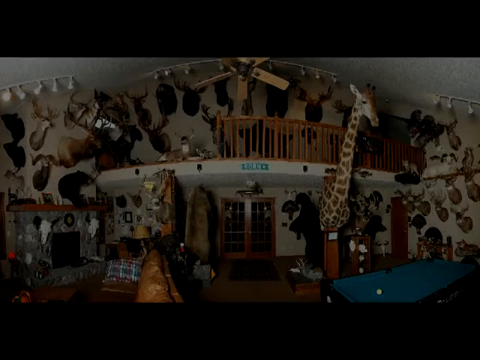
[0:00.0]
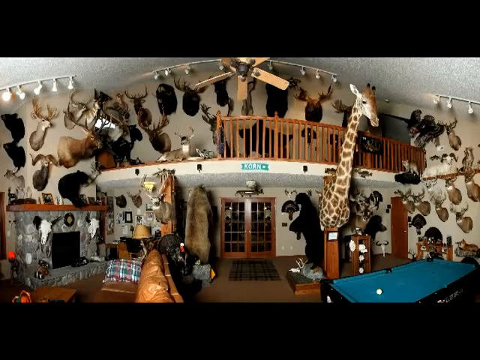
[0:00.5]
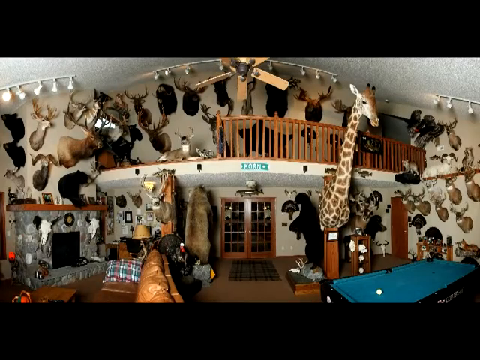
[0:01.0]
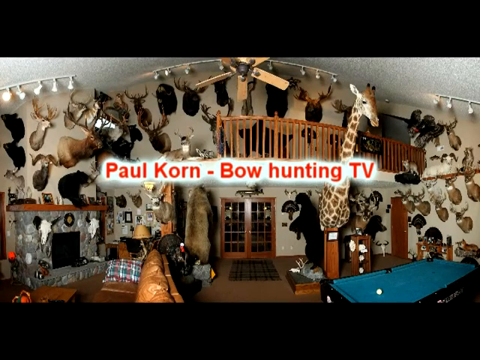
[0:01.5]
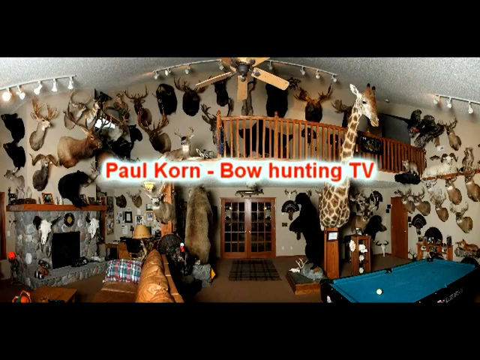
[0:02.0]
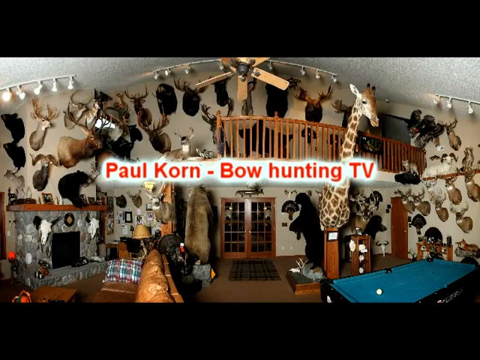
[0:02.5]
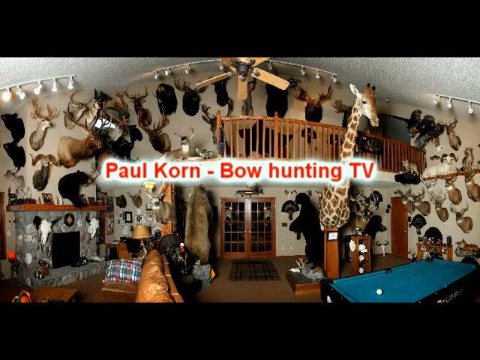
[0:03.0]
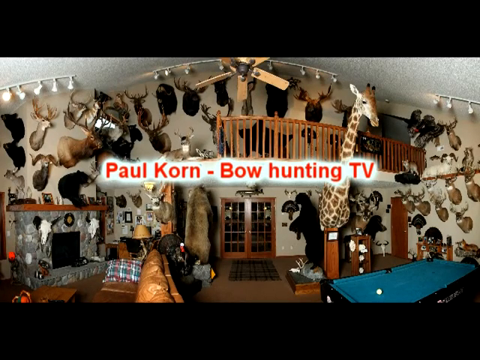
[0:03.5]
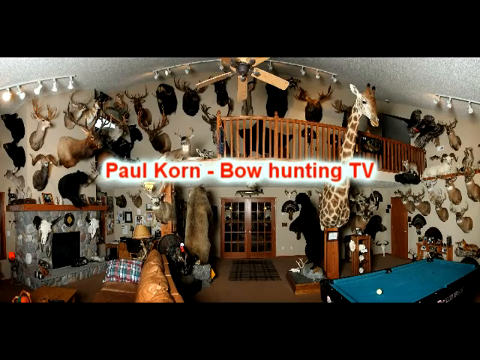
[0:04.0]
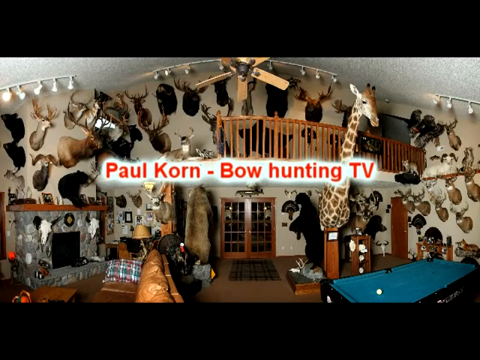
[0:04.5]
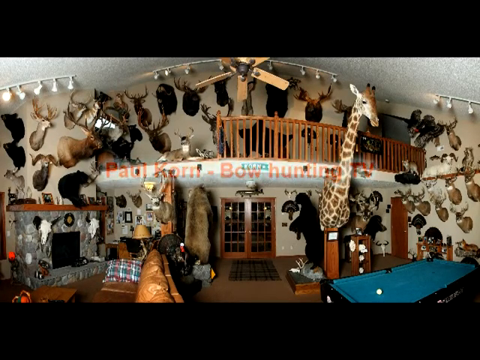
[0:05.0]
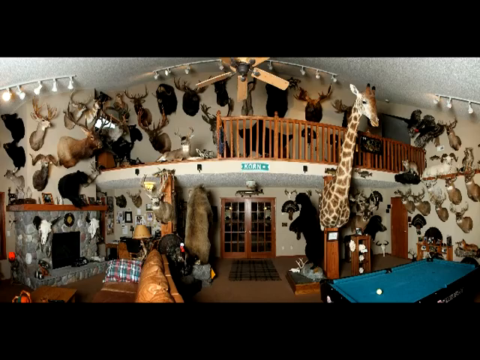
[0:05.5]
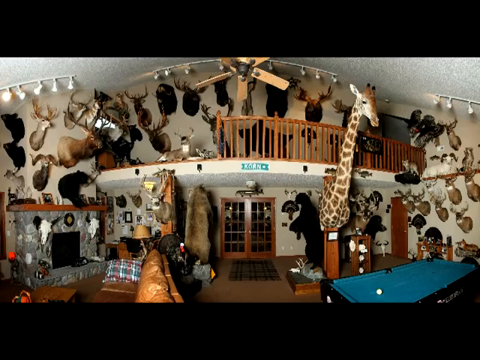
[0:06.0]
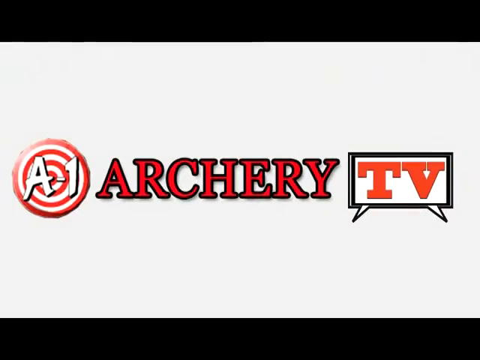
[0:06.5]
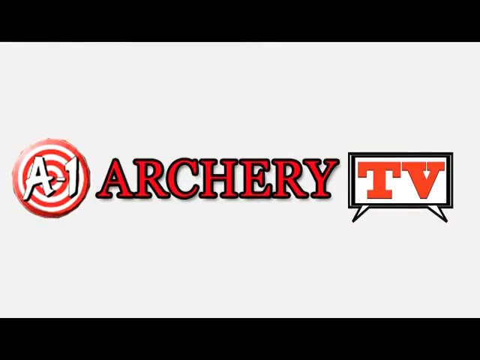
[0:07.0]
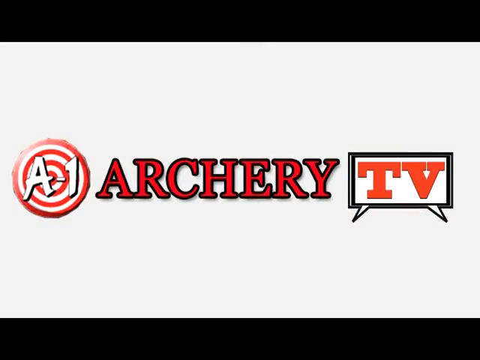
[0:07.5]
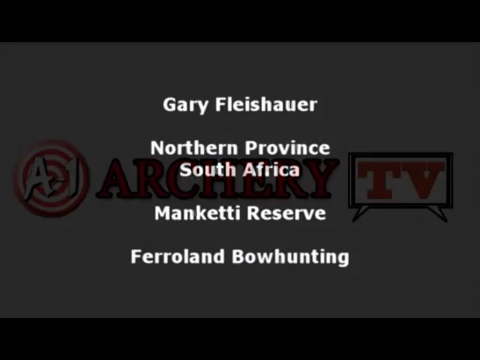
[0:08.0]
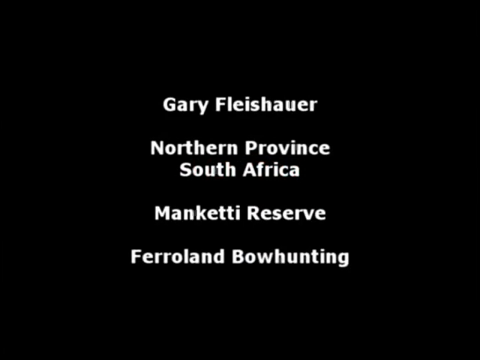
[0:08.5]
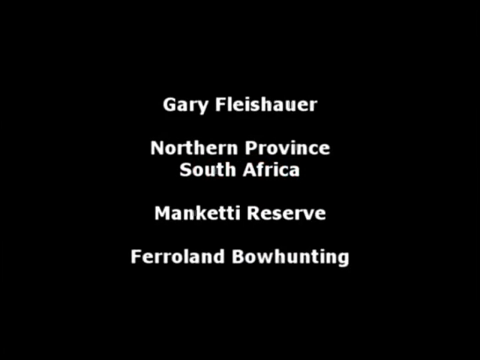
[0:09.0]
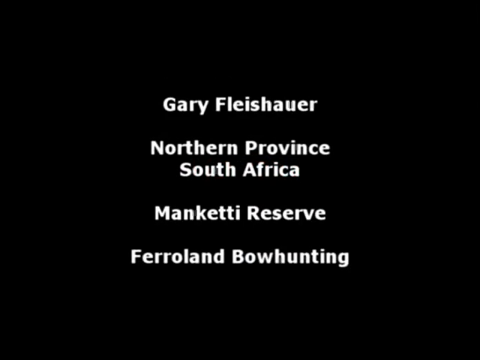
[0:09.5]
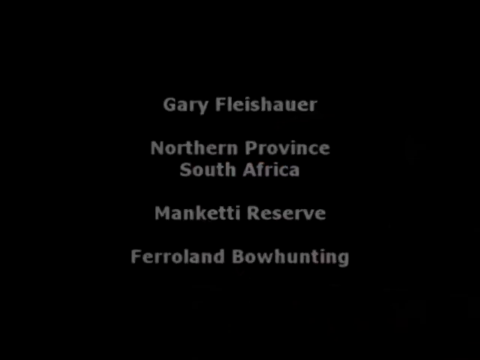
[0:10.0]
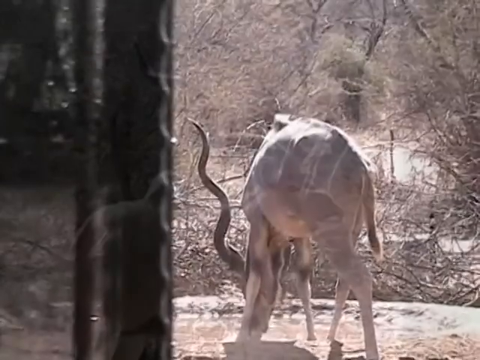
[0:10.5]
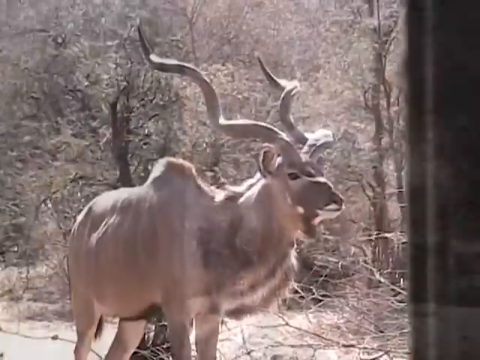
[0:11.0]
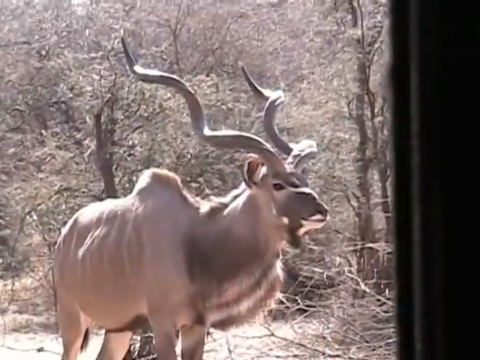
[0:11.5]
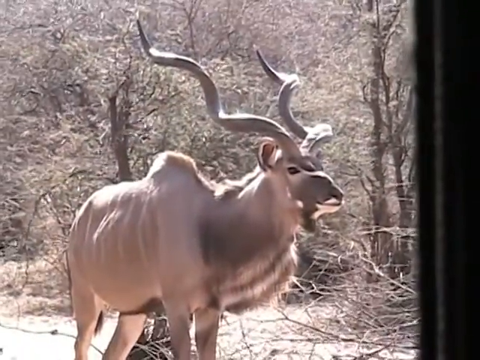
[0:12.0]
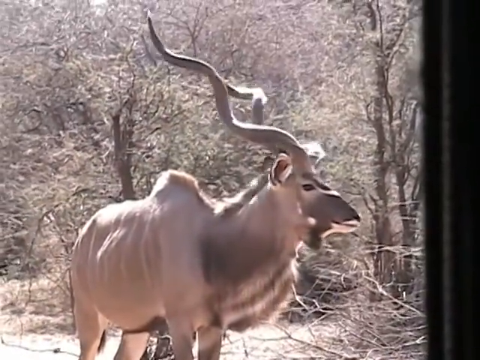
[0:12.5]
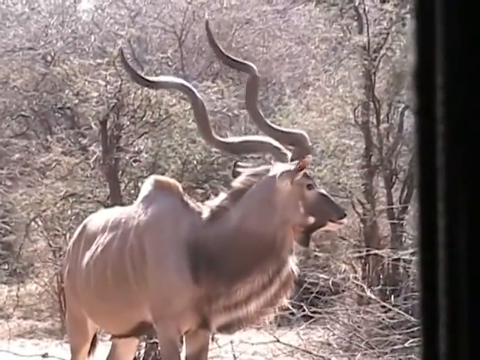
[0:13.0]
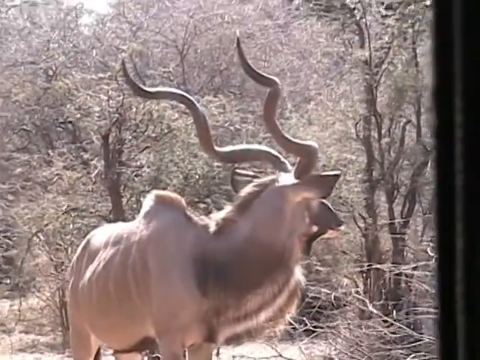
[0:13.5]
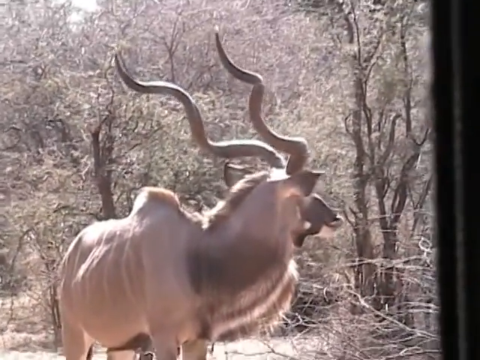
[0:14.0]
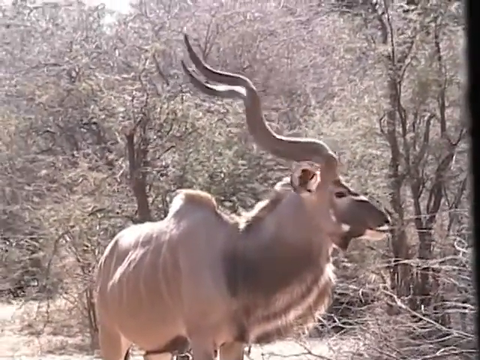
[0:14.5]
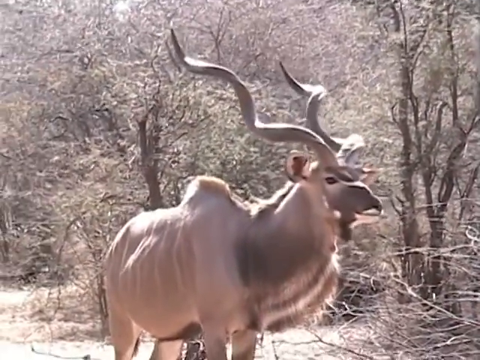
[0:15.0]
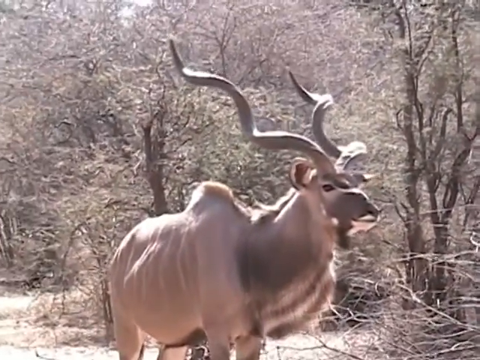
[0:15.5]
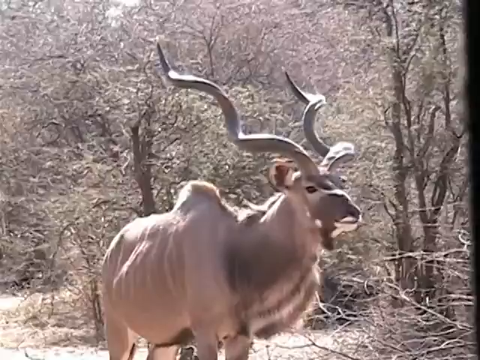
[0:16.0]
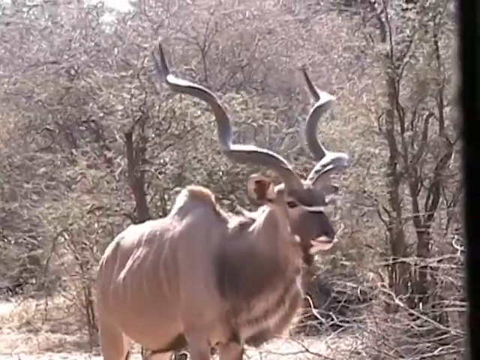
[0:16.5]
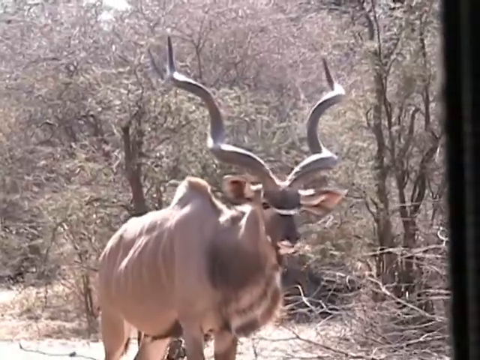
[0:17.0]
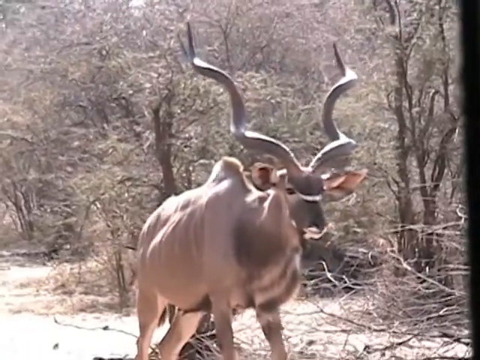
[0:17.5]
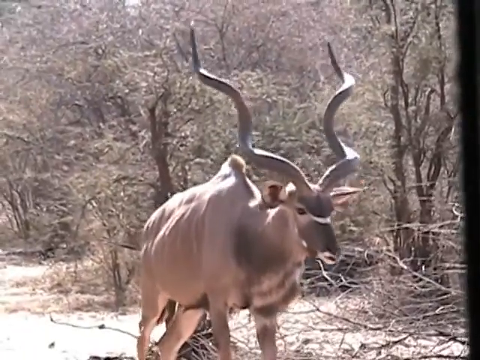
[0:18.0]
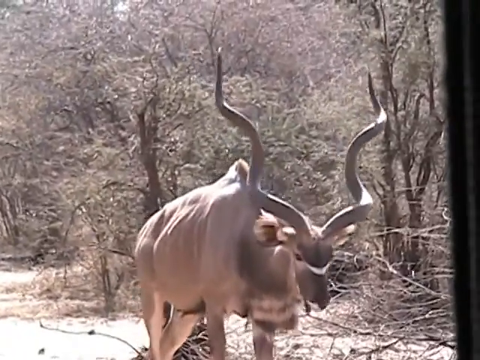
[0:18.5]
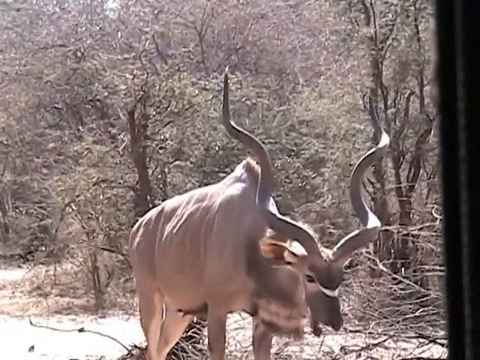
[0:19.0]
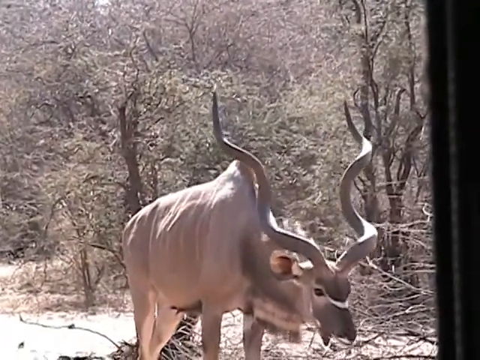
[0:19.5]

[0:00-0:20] The video begins with a large room with a variety of taxidermy arranged on the walls and stood up all around the room. There is also a pool table to the bottom right of the picture. The room looks like an old-style rural cottage or large wooden house. Text on the screen says "Paul Korn Bowhunting TV". The image then fades to another piece of text that says "A1", which is in front of a dartboard-style image; to the right of it, it says "archery", and there is a logo that says "TV" with a TV. This is displayed on a white background, which then fades to a black background with the text "Gary, Fleisha, Northern Province, South Africa, Manchetti Reserve, Faroe Land Bowhunting", all in white text. The image then fades to footage of a large springbok with large curved horns. The springbok looks around its surroundings before putting its head down.